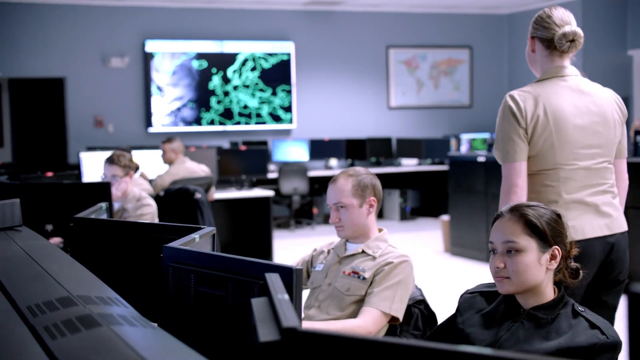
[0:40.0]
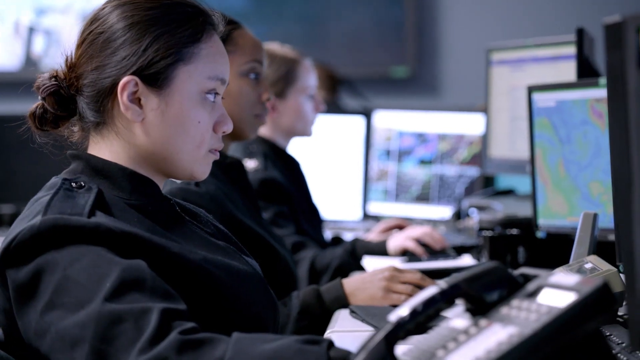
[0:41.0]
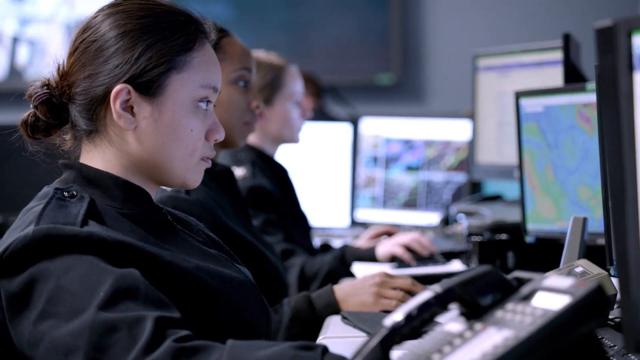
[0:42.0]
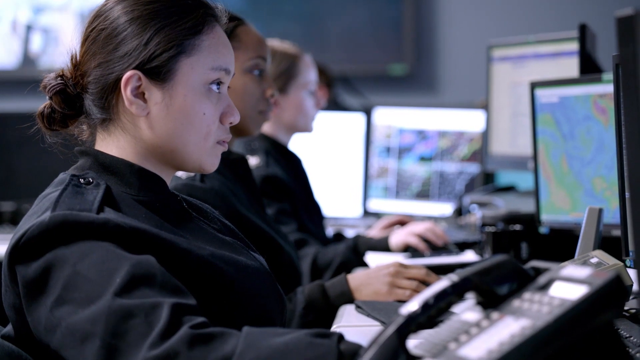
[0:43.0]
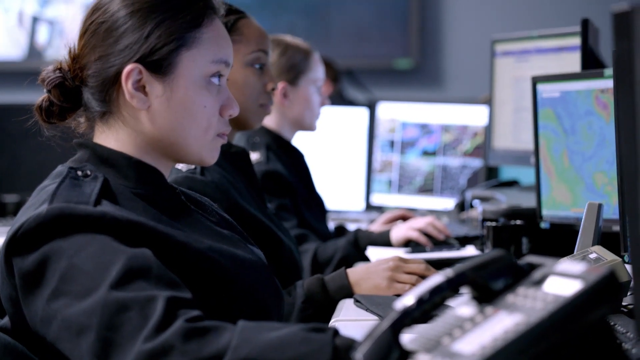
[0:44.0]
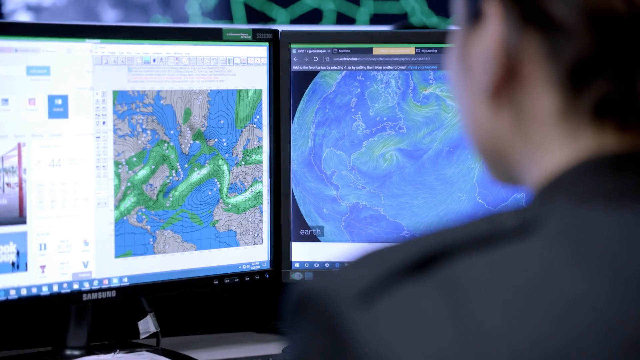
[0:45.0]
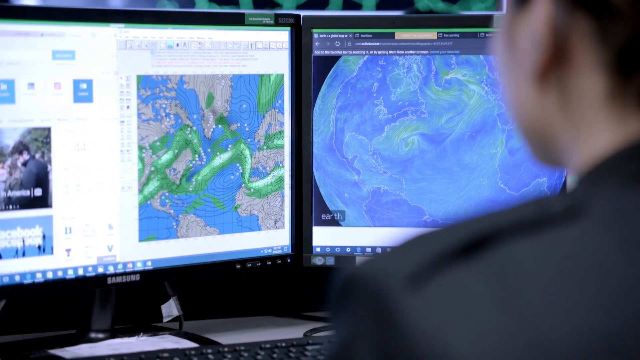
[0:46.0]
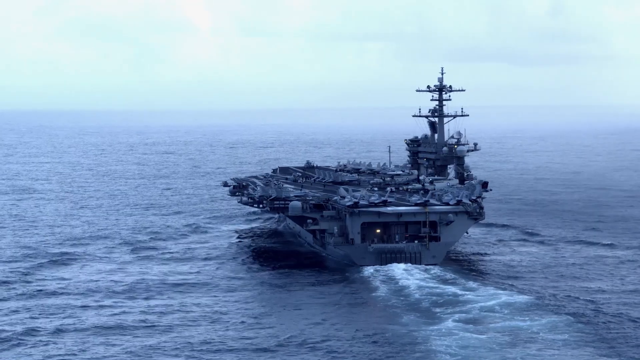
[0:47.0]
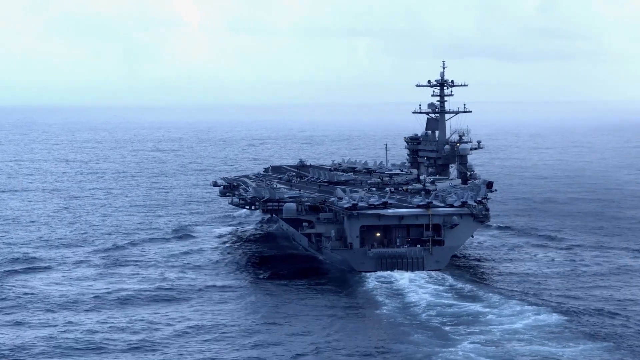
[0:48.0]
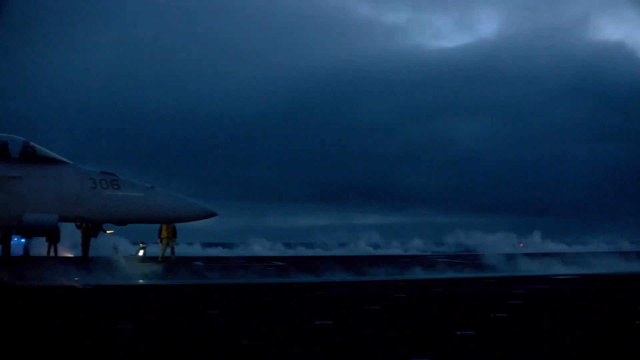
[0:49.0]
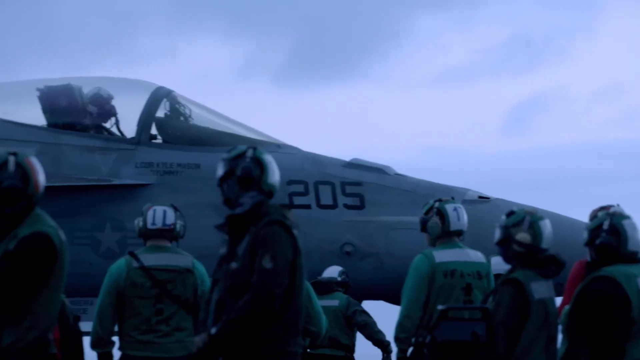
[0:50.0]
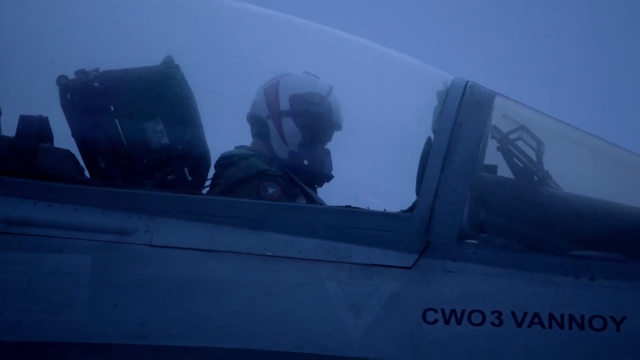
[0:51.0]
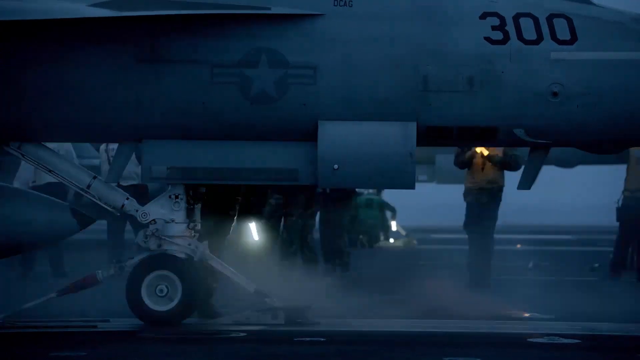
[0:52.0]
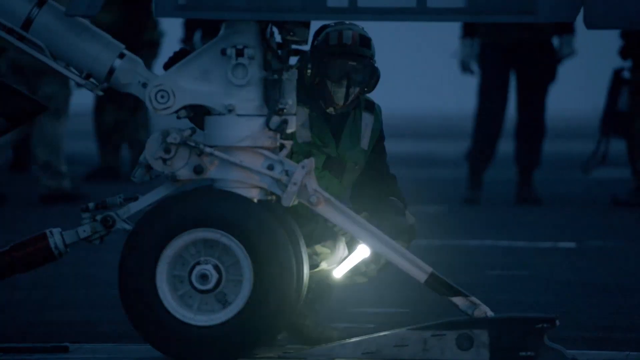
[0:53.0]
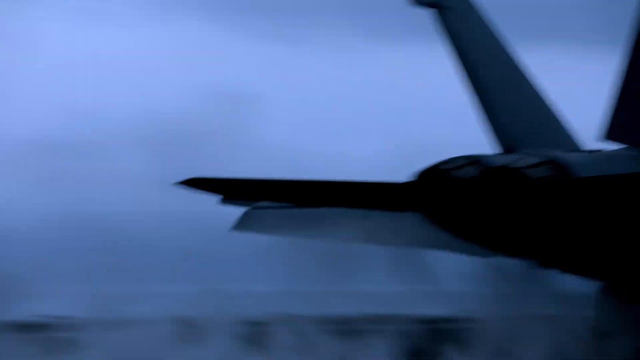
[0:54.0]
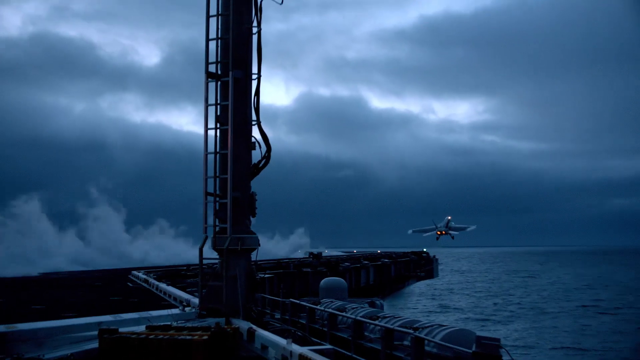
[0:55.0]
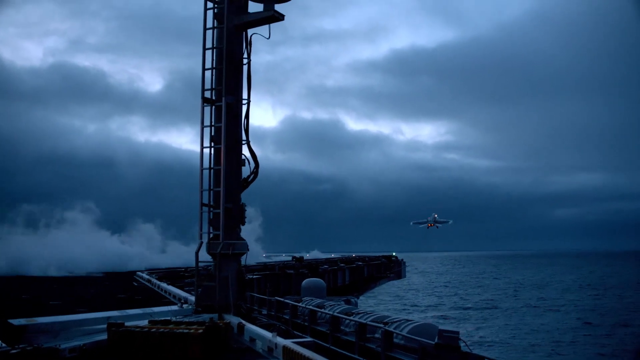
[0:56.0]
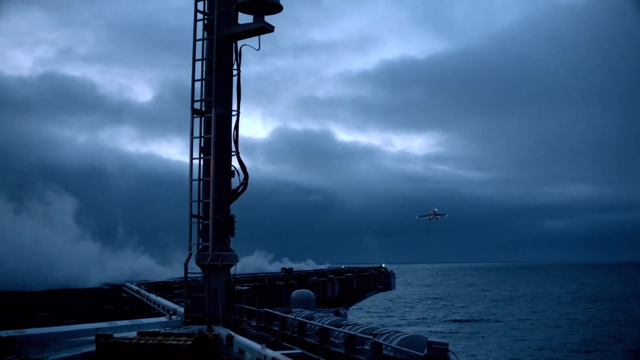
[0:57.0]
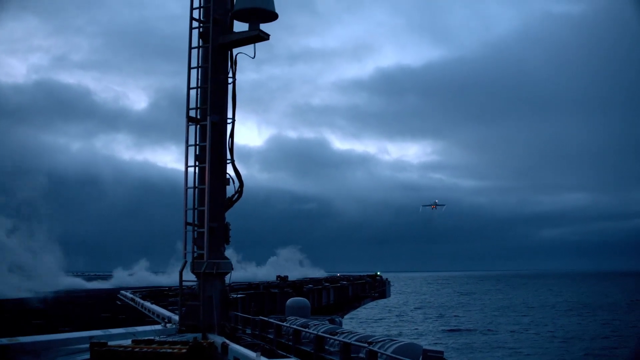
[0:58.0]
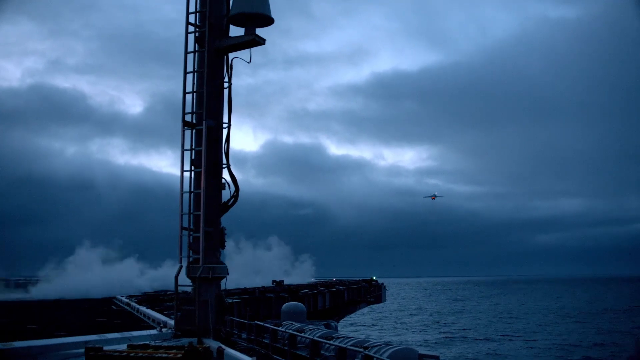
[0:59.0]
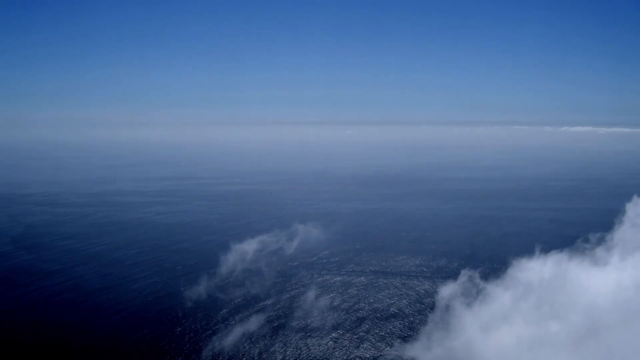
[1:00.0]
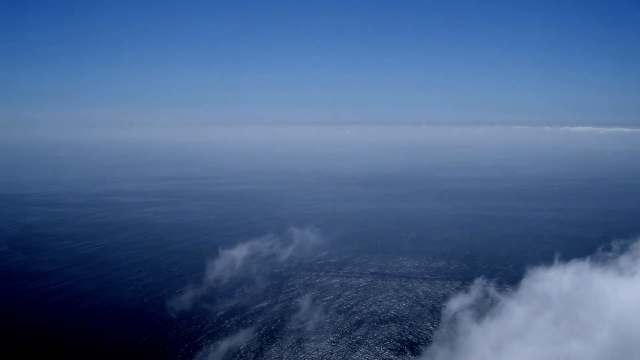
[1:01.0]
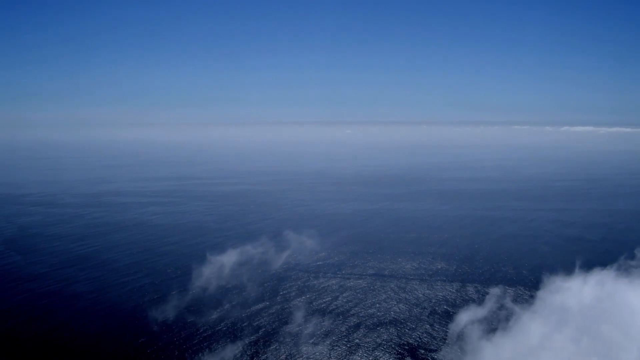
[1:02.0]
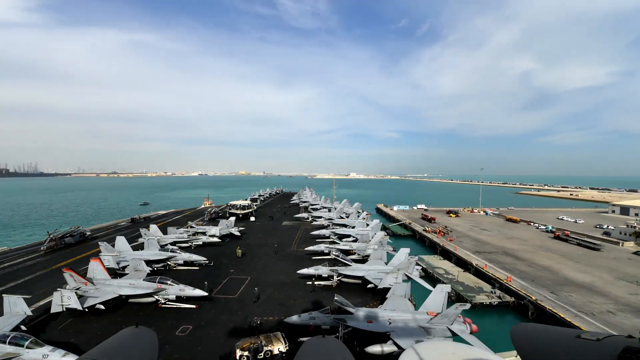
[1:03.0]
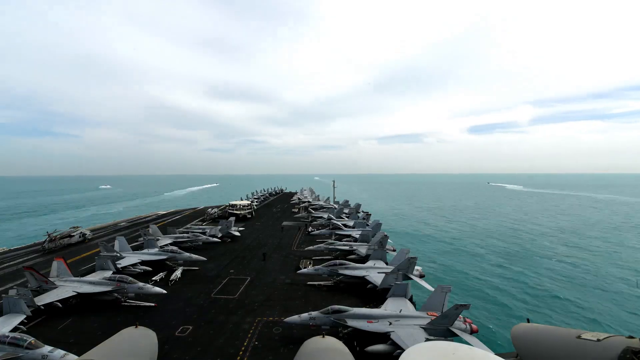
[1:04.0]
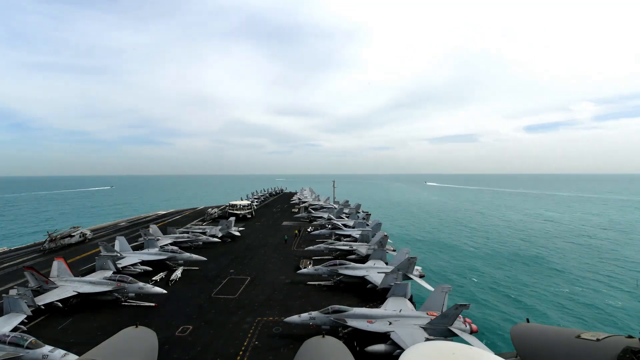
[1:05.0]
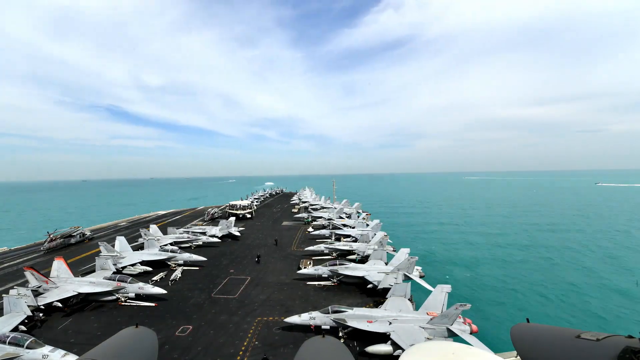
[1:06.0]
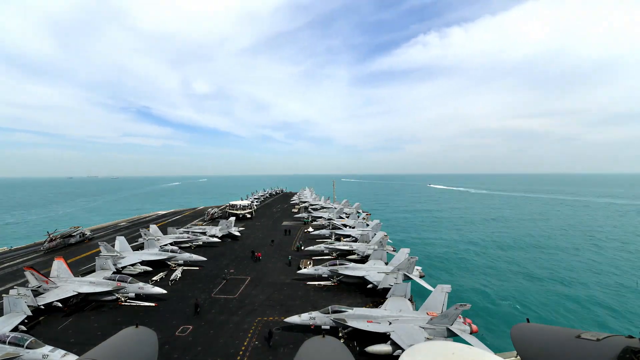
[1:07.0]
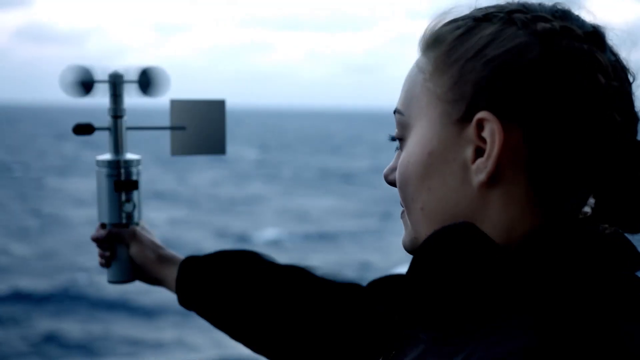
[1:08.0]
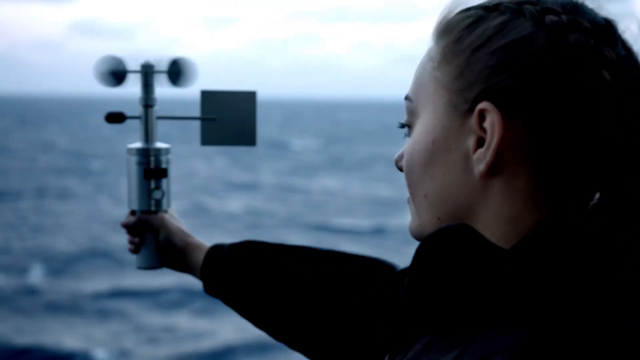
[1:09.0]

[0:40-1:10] The camera stays on a woman for more than a split second as she looks at a screen. She has her hair up and looks at a computer showing what may be some sort of weather report. The video moves to a ship that appears to be the kind from which military planes take off. Plane workers, plane wheels and people helping others into different places are shown, along with planes taking off amid lots of smoke on a very cloudy day. After takeoff, a brief shot from the air shows the sky, followed by a time-lapse shot of planes over the ocean. The same woman is then seen holding something in her hand that appears to be some sort of weather device.